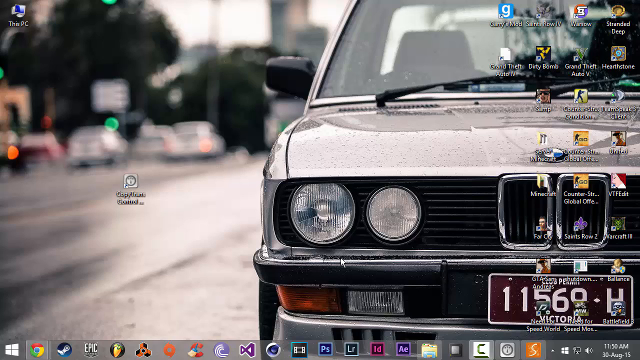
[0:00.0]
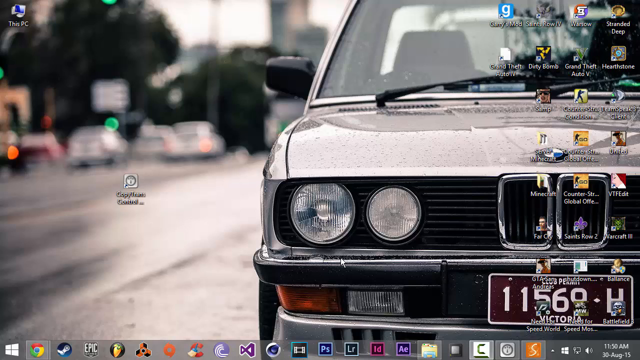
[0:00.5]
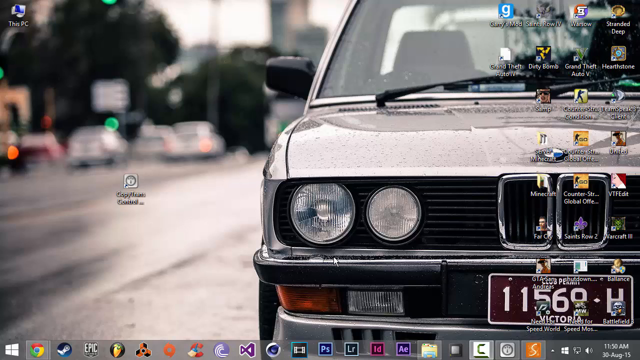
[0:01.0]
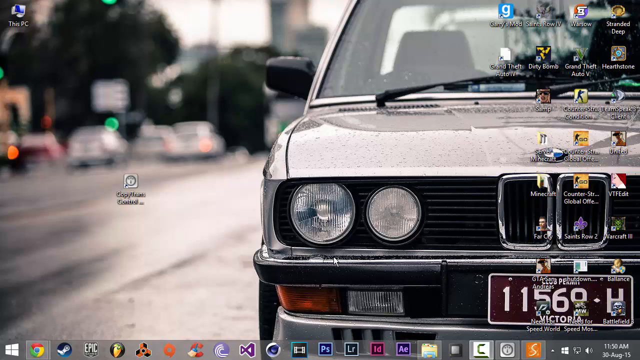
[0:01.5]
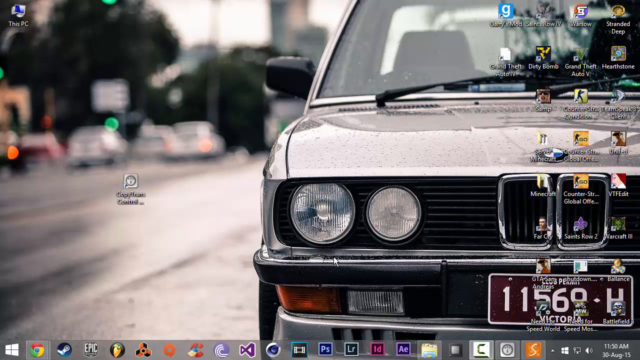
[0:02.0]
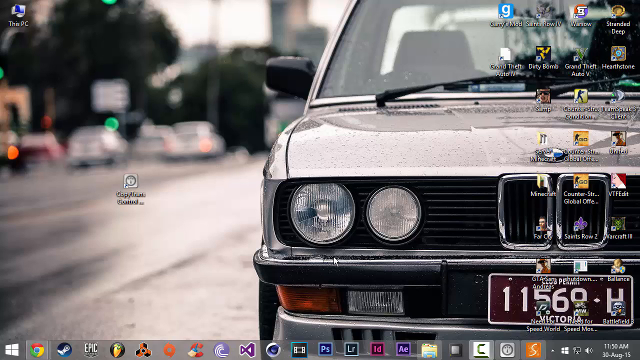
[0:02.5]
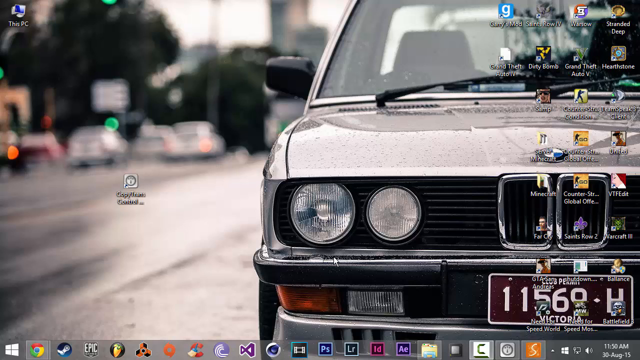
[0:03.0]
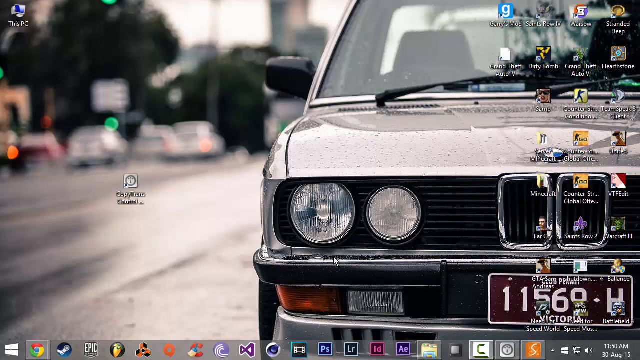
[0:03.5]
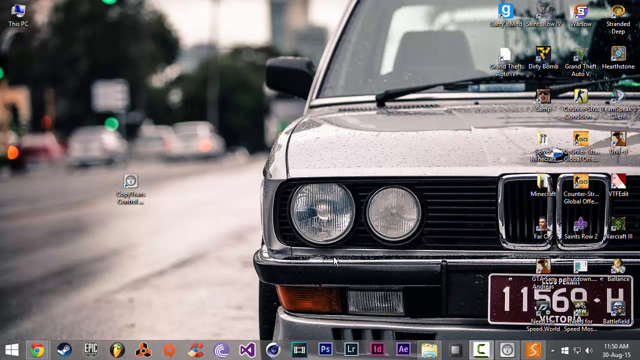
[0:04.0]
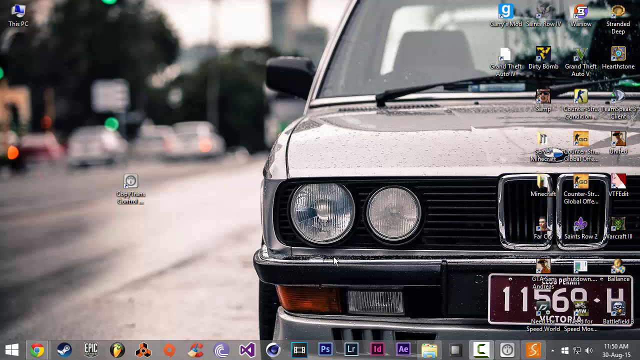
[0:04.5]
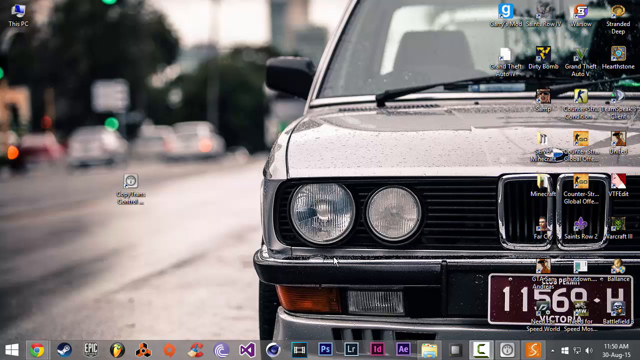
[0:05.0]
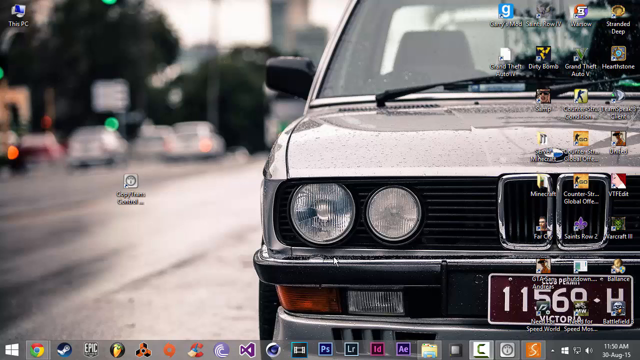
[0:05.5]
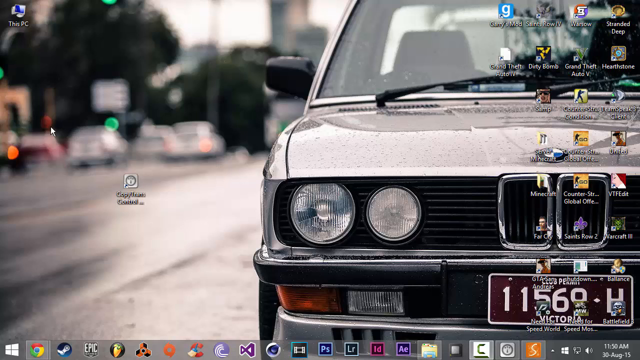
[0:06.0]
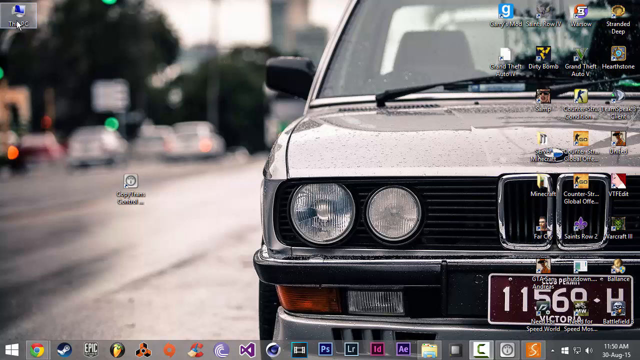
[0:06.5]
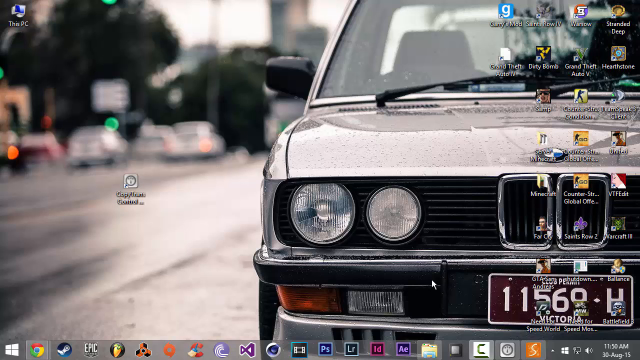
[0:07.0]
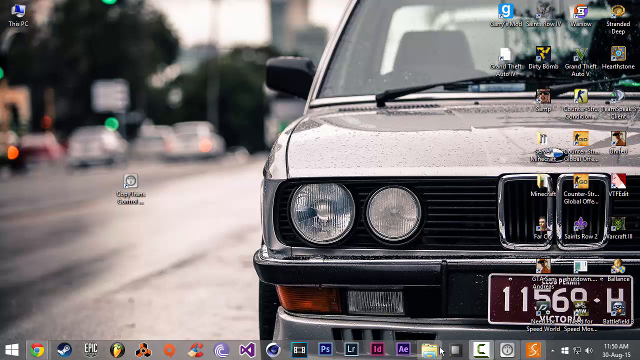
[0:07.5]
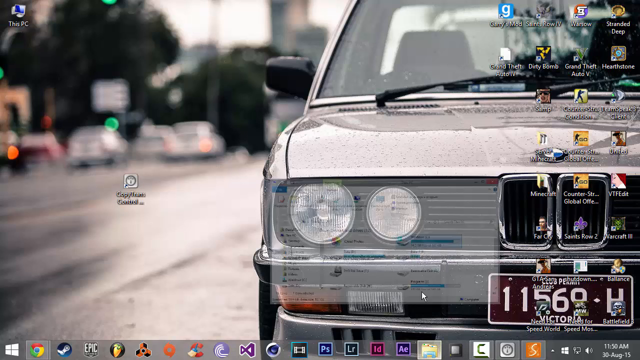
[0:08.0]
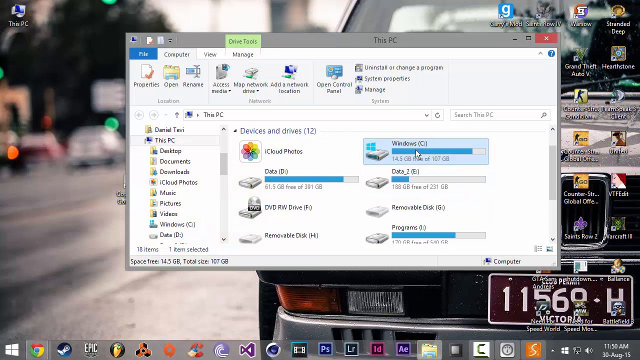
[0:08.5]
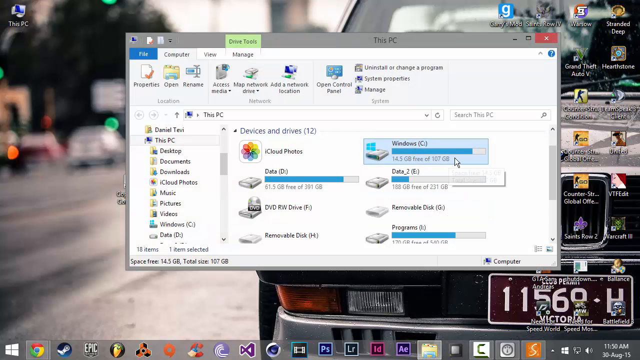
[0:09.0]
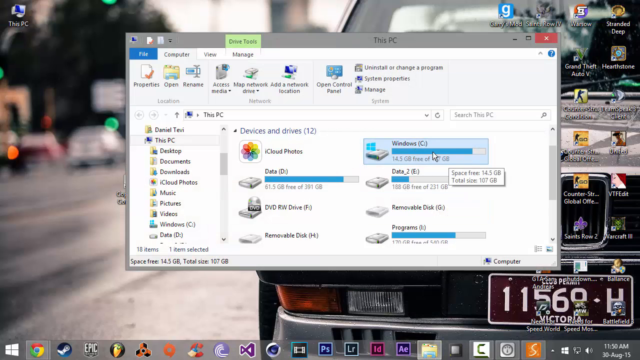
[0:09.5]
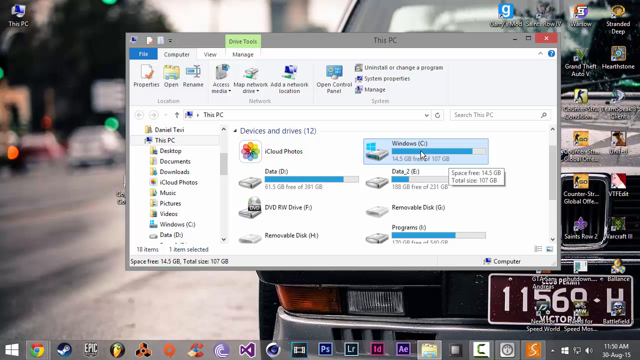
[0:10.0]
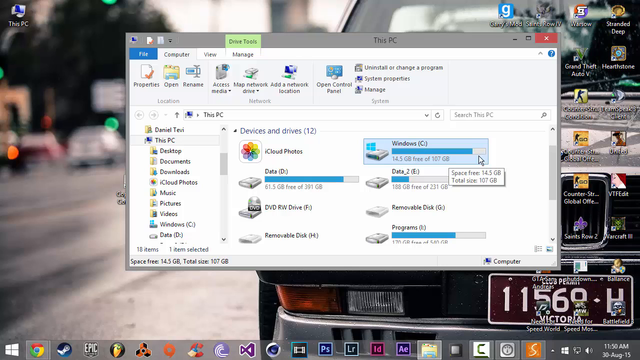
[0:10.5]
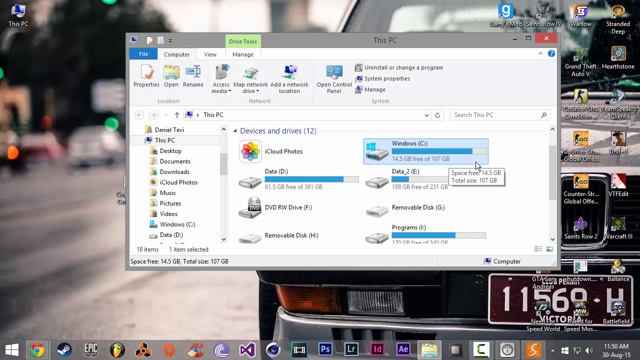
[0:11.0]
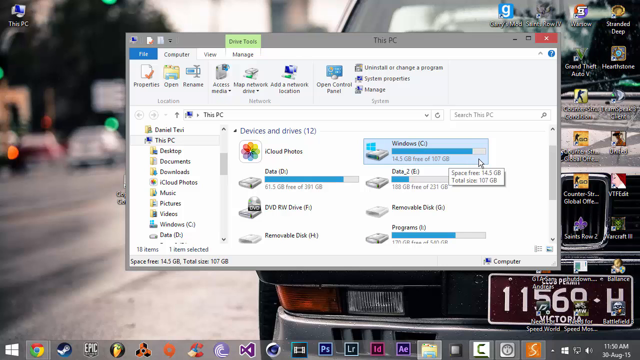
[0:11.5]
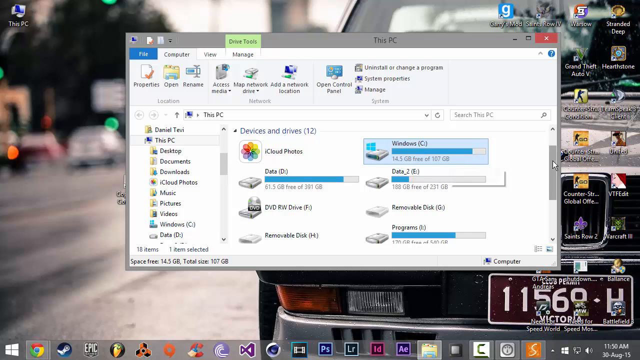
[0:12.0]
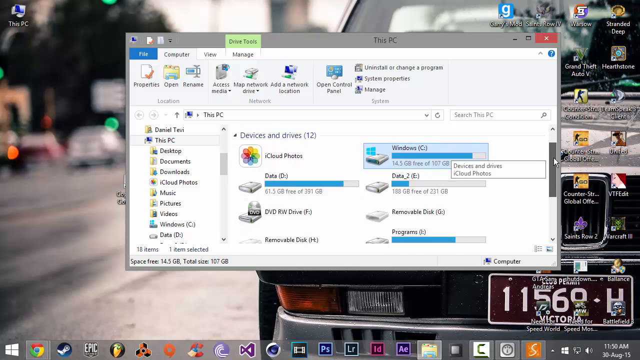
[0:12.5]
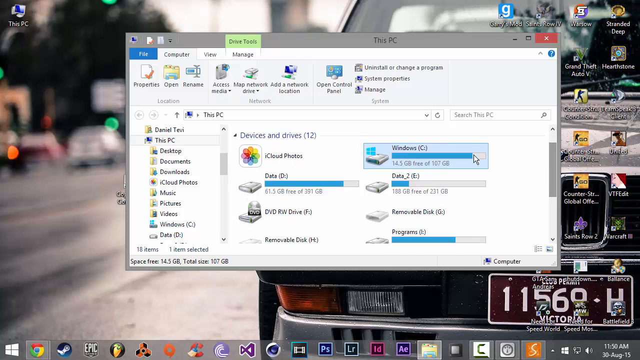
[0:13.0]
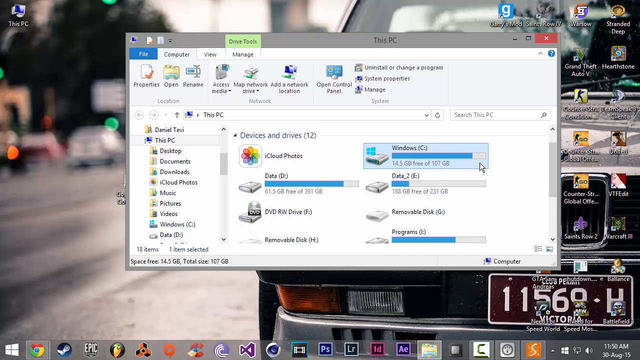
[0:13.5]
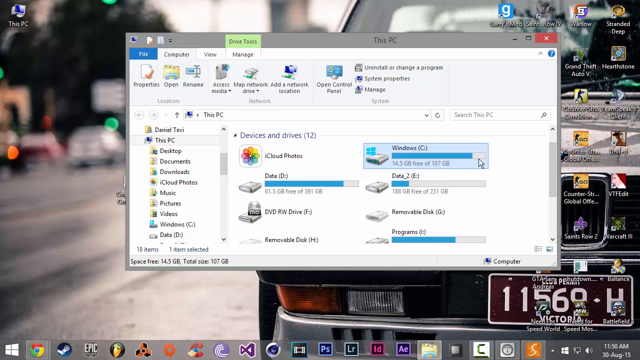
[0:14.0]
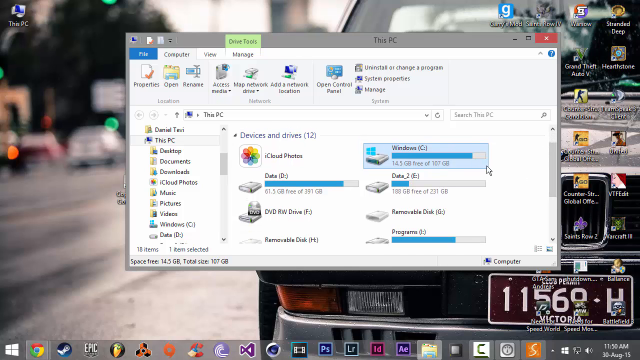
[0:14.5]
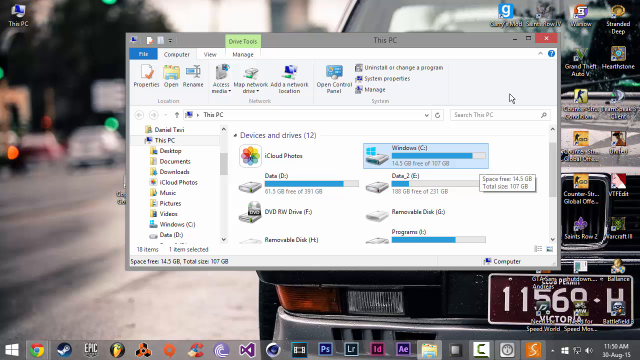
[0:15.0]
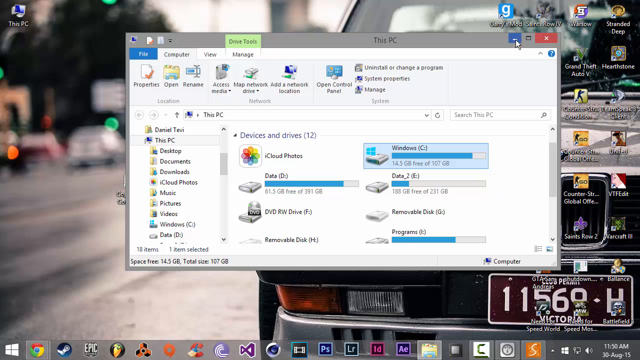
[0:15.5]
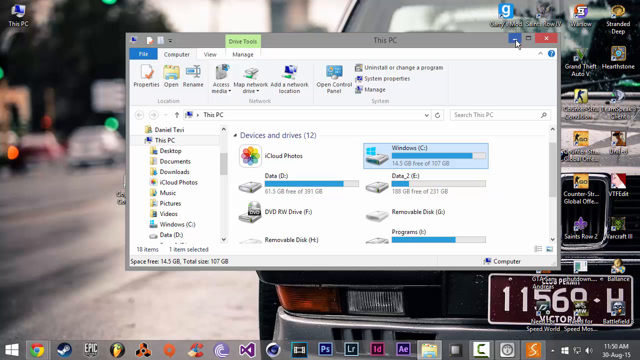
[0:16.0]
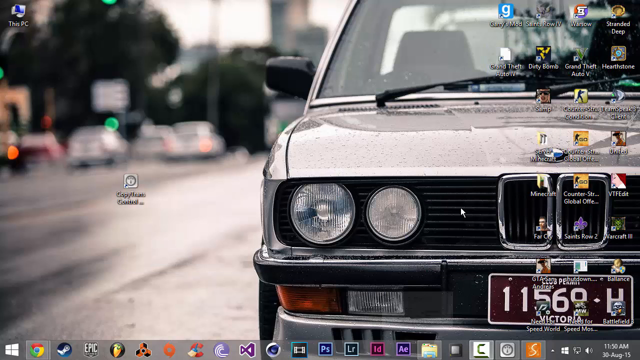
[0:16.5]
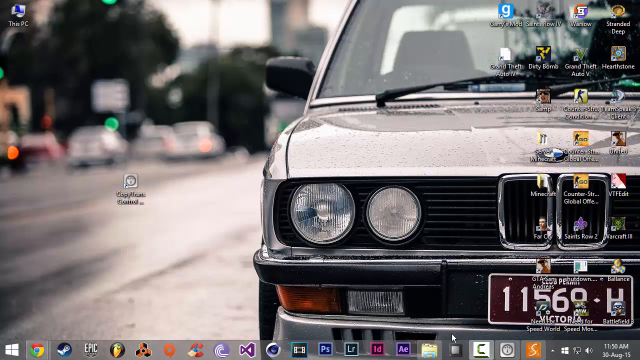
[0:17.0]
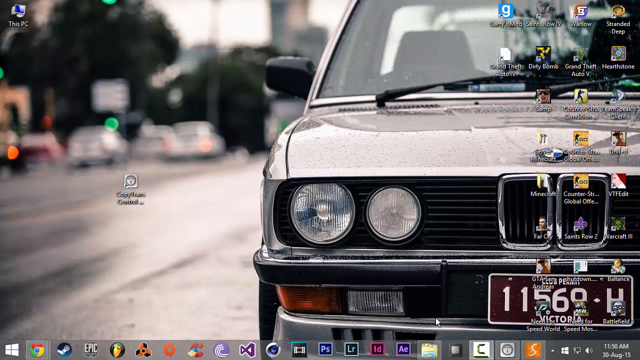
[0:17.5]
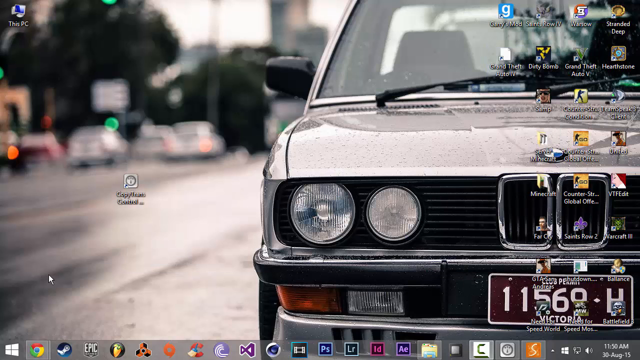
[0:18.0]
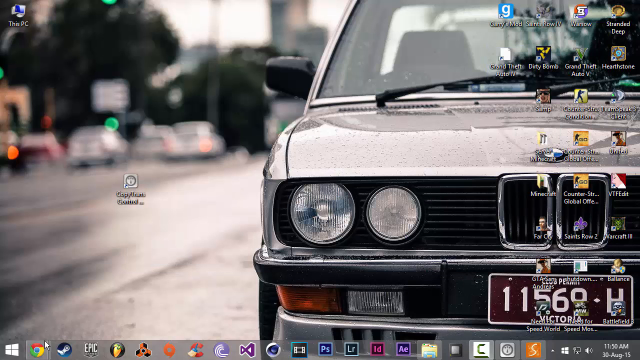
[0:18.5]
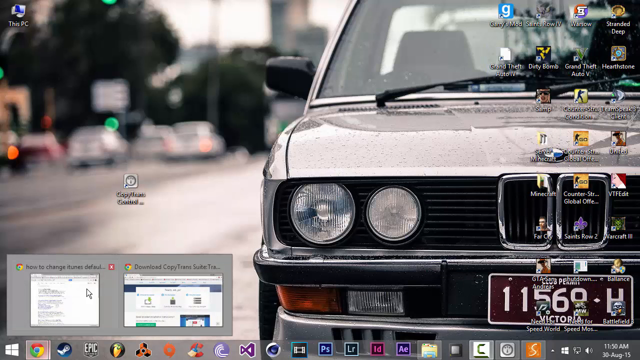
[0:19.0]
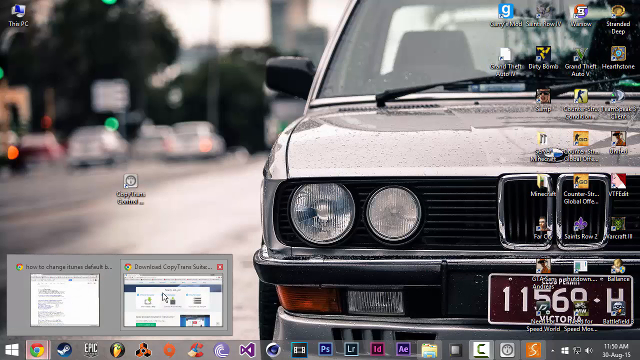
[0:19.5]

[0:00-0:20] A computer screen shows a wallpaper of an old silver BMW that seems to be parked on a street; the street is wet and so is the car, as it has been raining. On the right side there are a whole bunch of icons, and on the left there is one icon in the top left corner. The user seems to click on that icon, and a window pops up that looks like the control panel. They seem to highlight the Windows C drive, then scroll up and down with the cursor. They then minimize the window and click on the Chrome icon, and a window appears. The Chrome icon is in the bottom left corner of the screen, and there seem to be a whole bunch of other icons along the bottom of the screen as well.